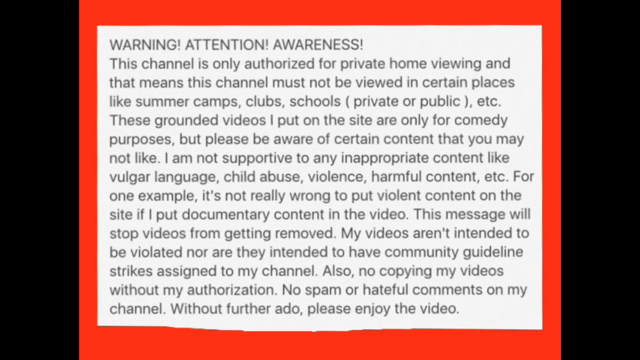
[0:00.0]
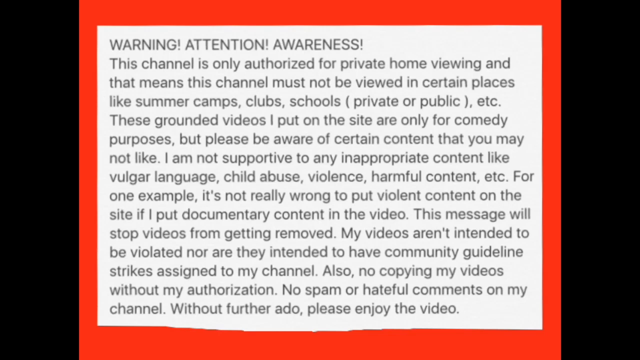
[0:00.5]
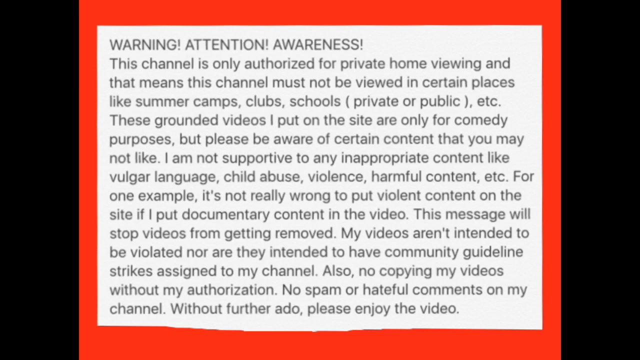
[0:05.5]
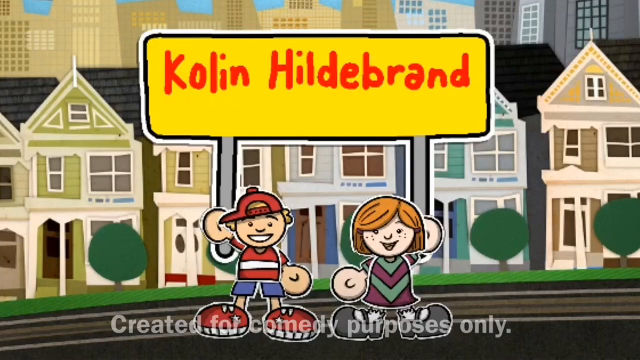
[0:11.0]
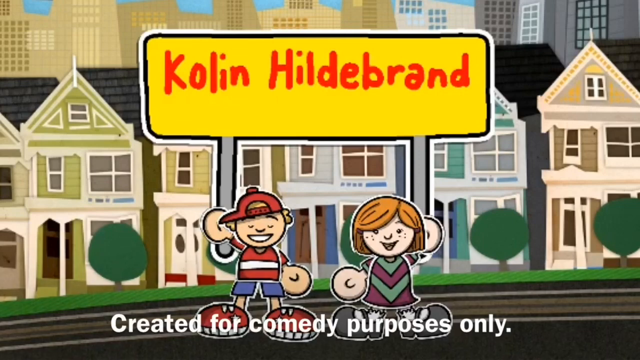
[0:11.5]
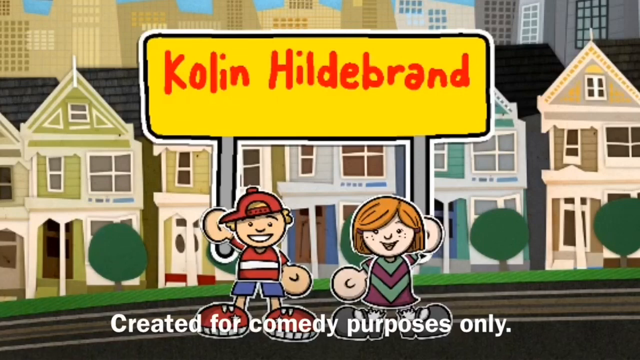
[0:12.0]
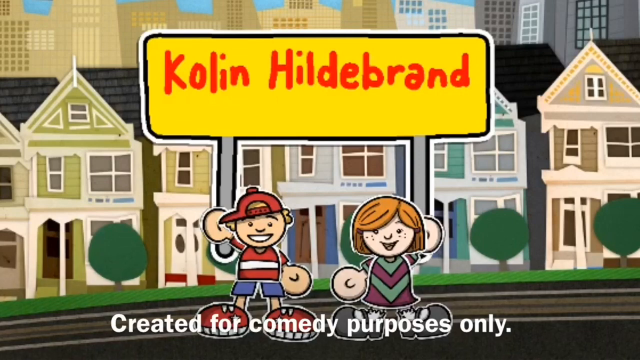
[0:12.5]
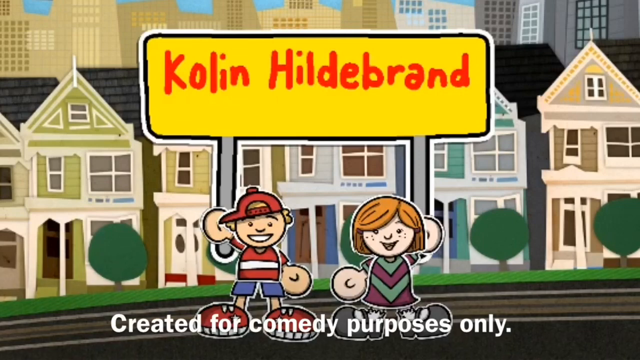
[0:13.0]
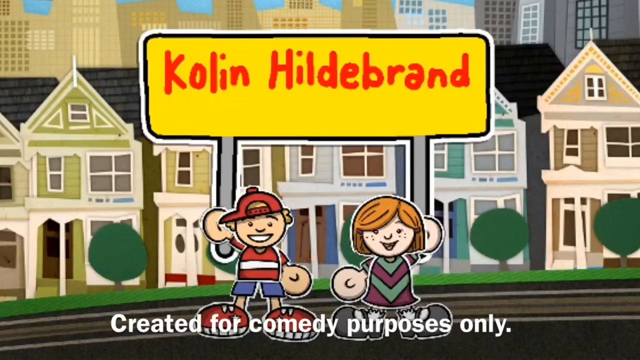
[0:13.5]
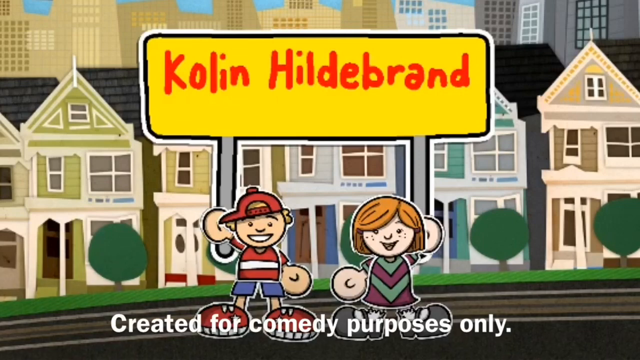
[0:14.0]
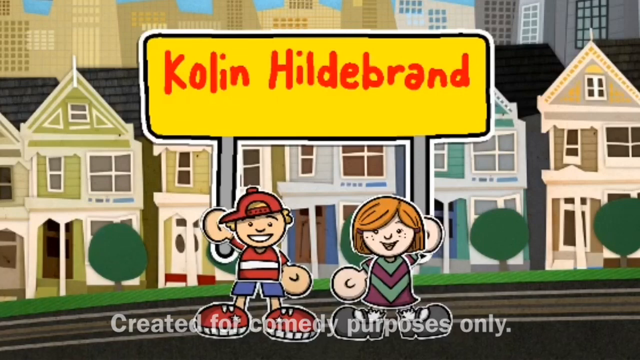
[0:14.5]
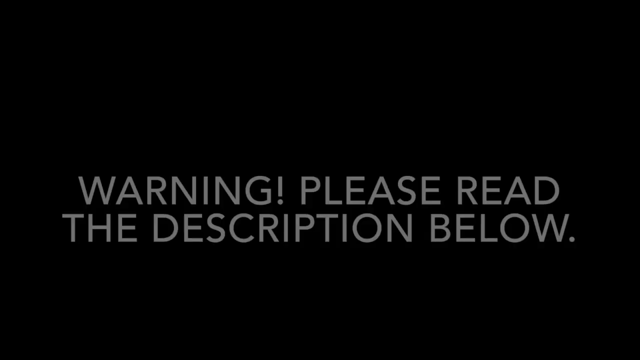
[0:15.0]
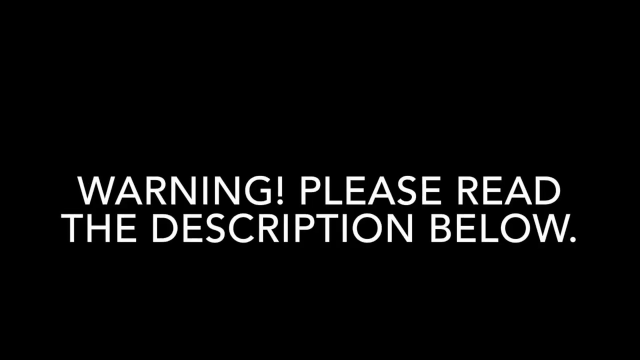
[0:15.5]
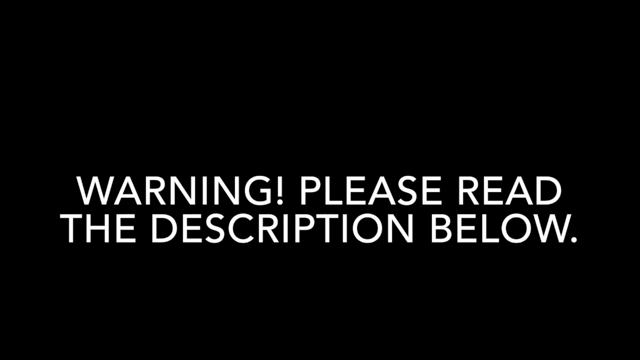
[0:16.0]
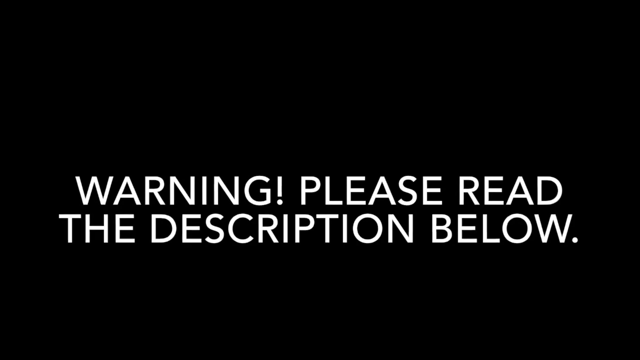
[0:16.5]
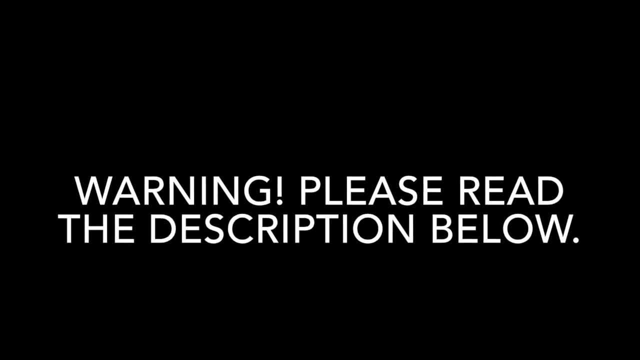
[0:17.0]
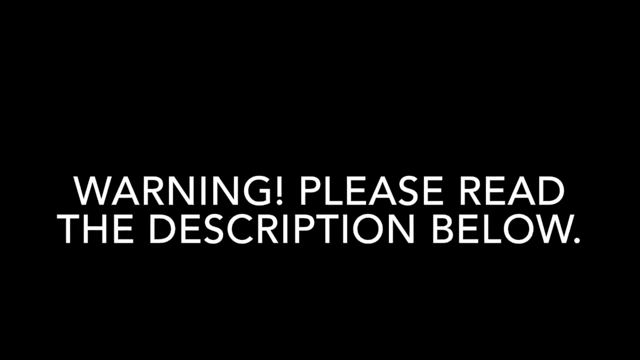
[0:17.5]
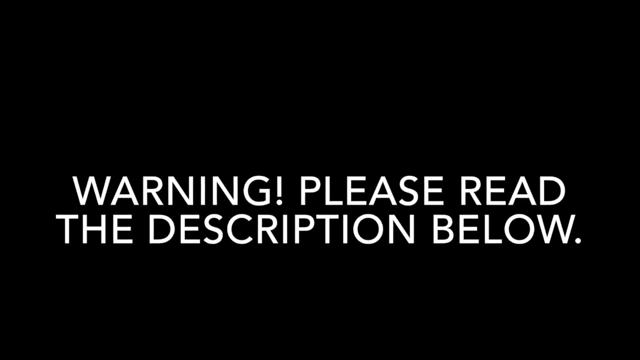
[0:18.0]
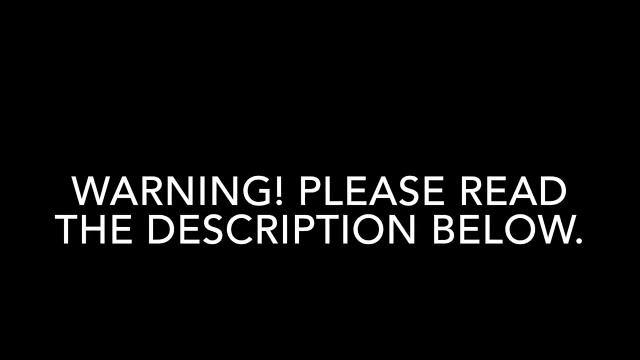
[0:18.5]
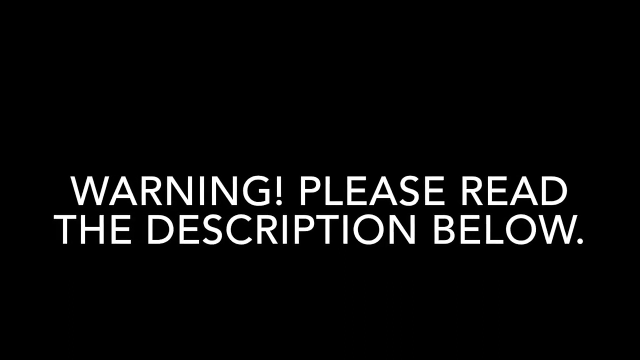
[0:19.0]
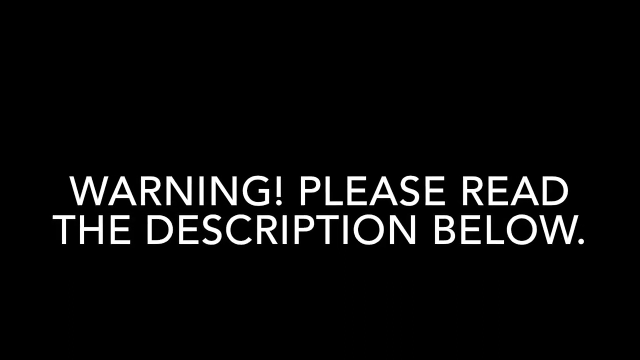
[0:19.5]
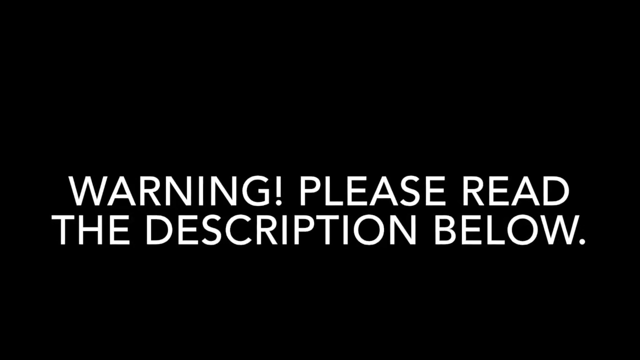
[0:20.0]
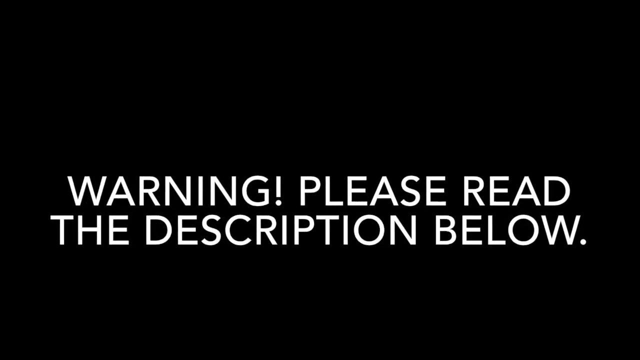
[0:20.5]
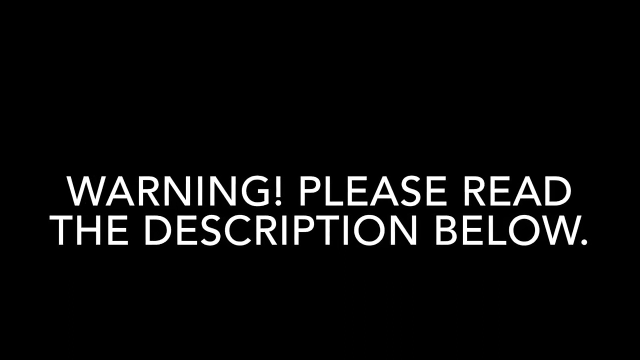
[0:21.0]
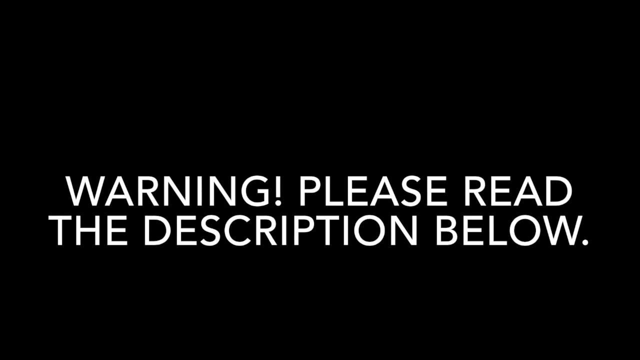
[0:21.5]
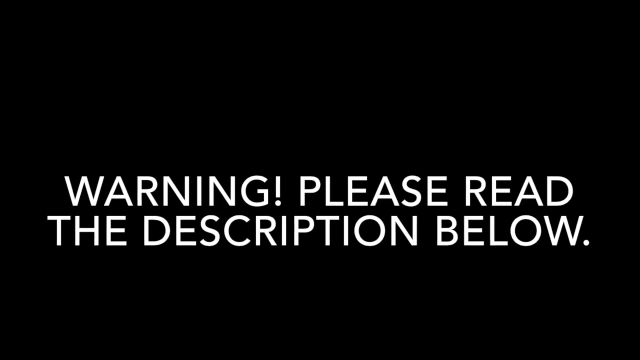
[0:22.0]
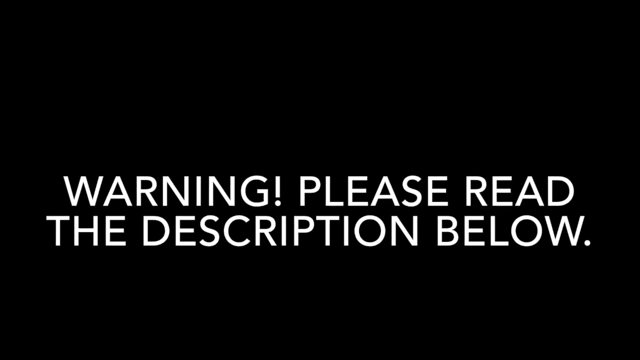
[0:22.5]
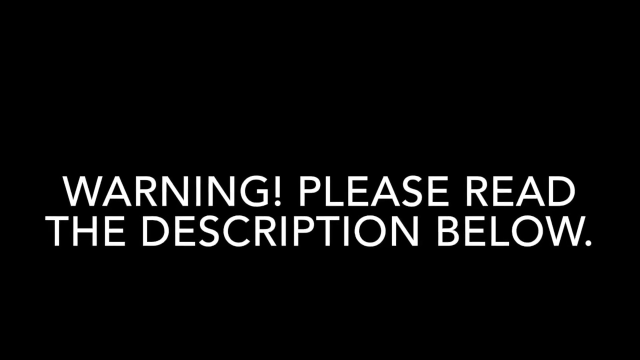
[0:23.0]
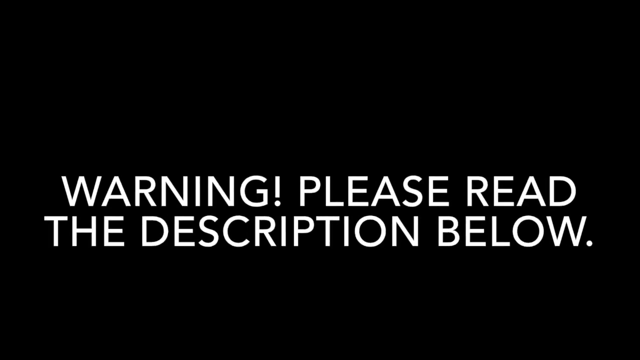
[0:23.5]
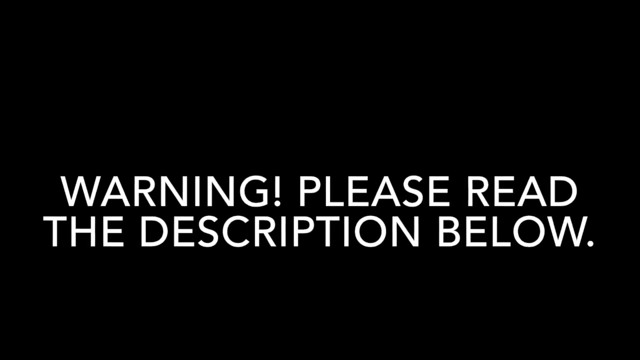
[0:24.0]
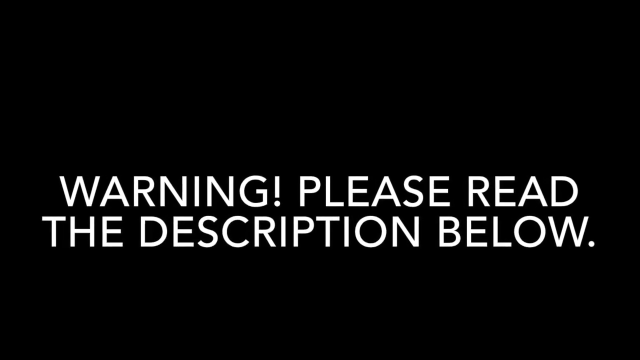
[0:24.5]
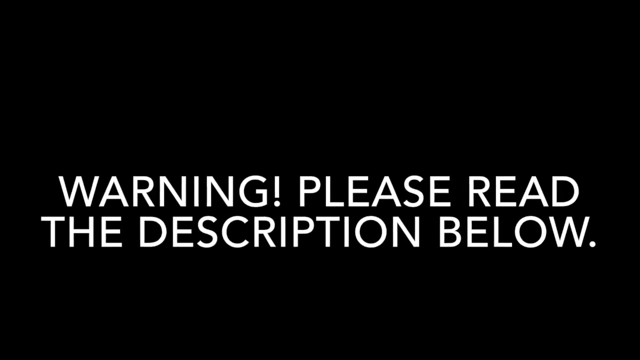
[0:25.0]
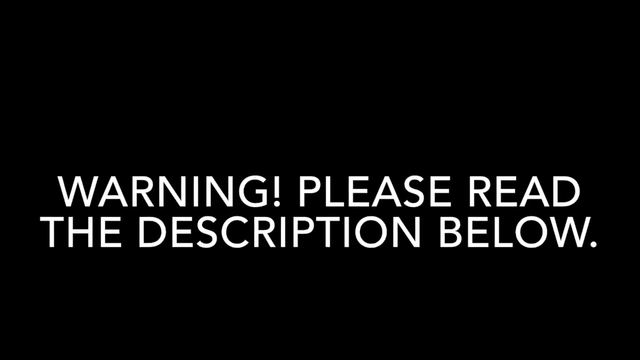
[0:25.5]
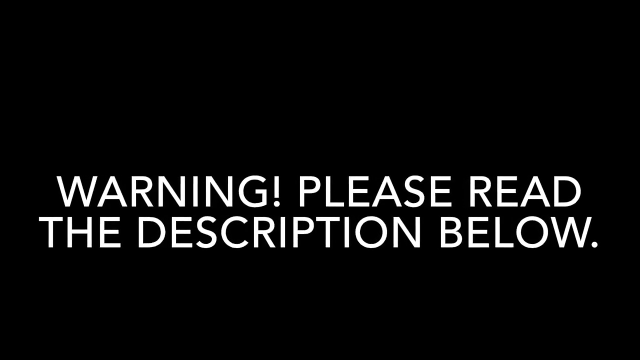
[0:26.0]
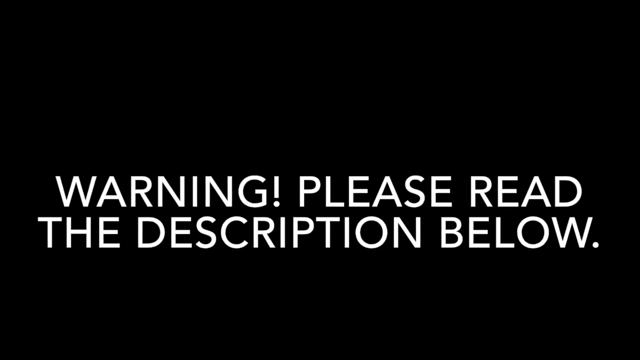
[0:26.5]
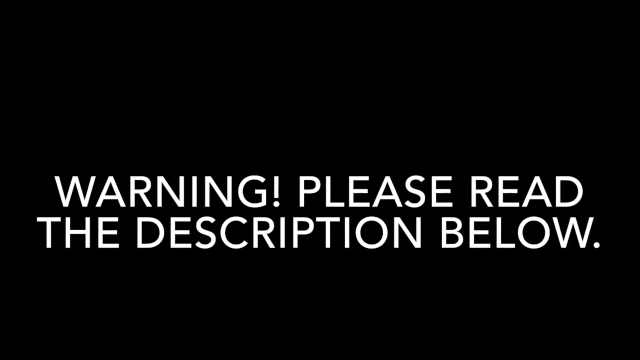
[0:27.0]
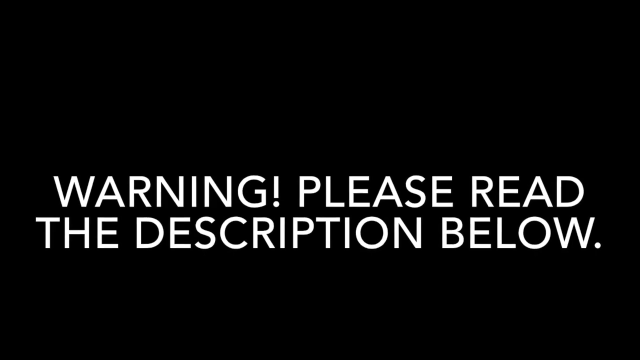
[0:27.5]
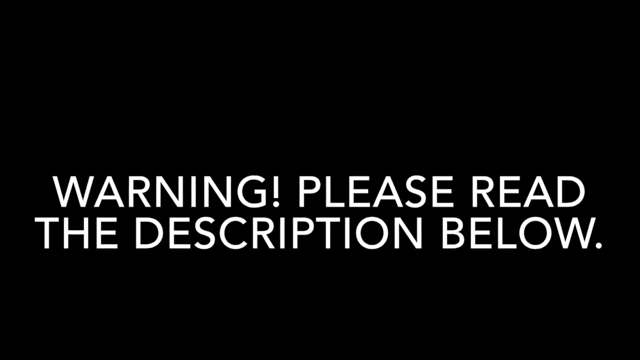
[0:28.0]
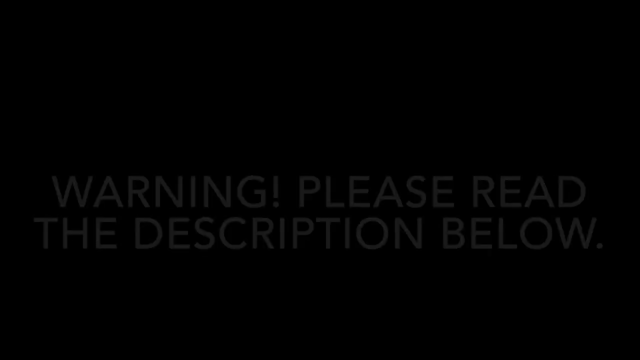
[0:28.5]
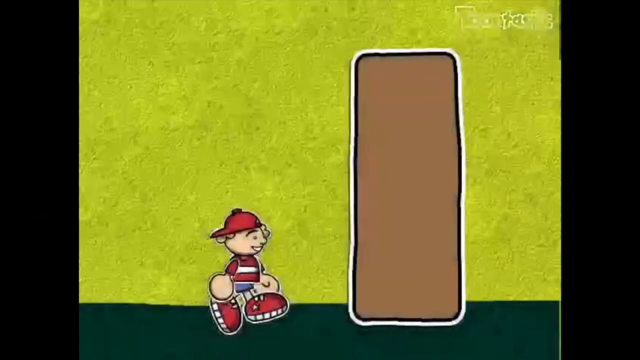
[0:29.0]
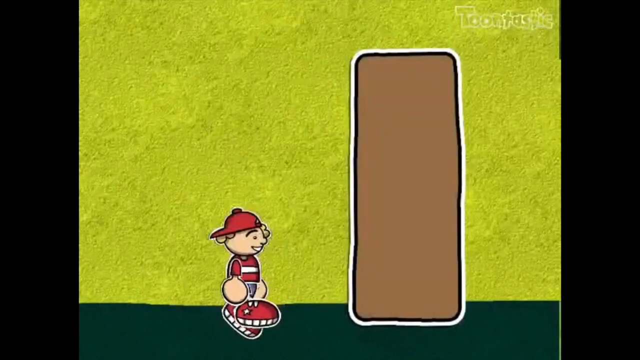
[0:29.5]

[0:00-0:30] The video opens with a warning that the channel is to be viewed at home only and not in places such as campus. Another warning reads "please read the description below." Two animated characters appear, a female and a male, along with the name Colin Heilbrand; underneath, text states it is "created for comedy purpose only." Next, an animated boy wearing a baseball cap tries to walk through something like a door. The background is yellow and the door is brownish.